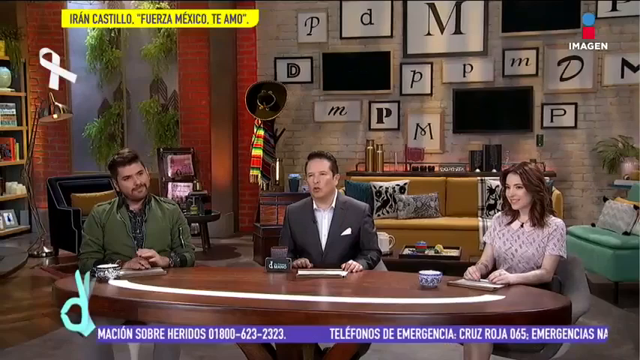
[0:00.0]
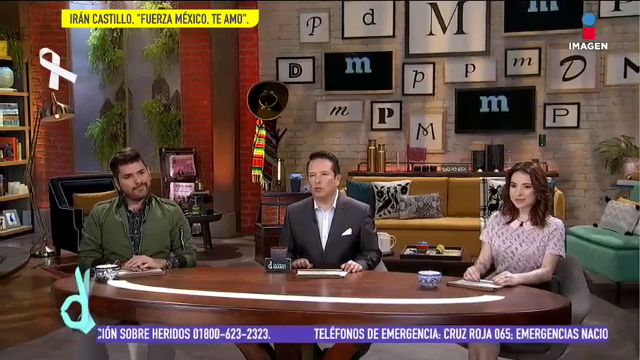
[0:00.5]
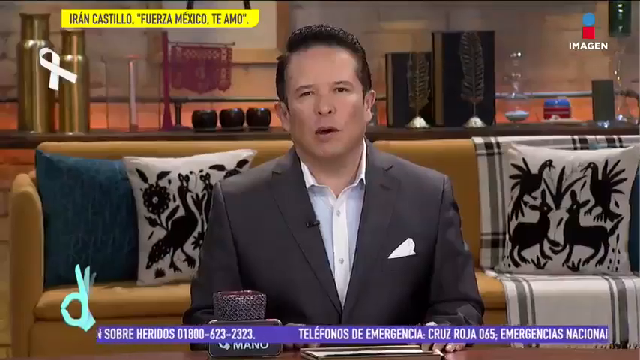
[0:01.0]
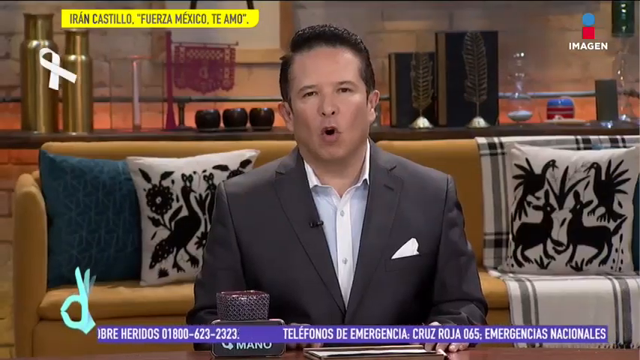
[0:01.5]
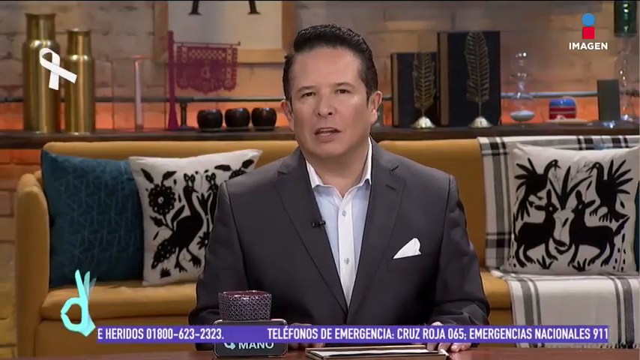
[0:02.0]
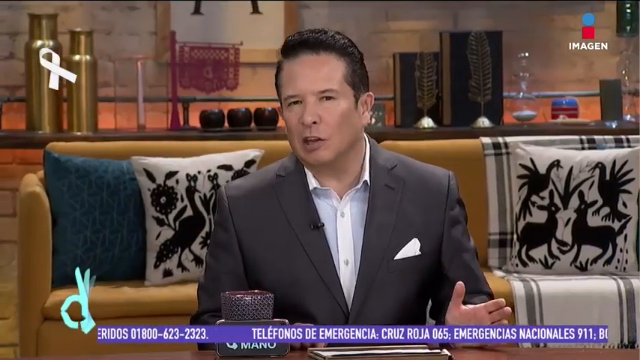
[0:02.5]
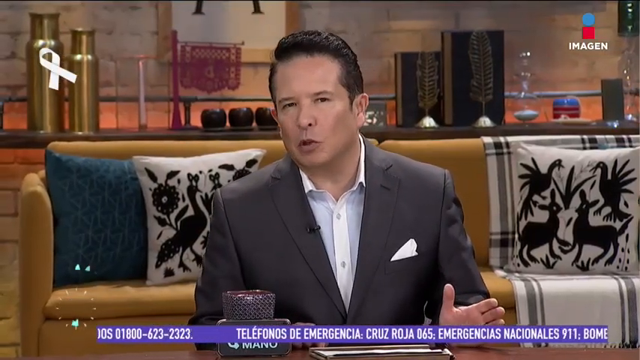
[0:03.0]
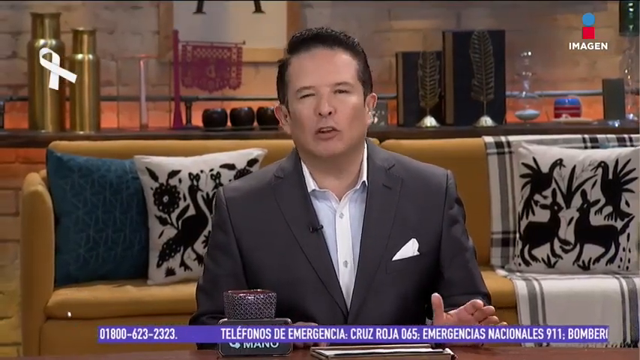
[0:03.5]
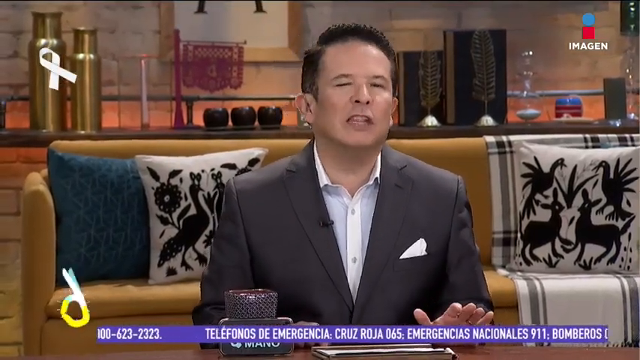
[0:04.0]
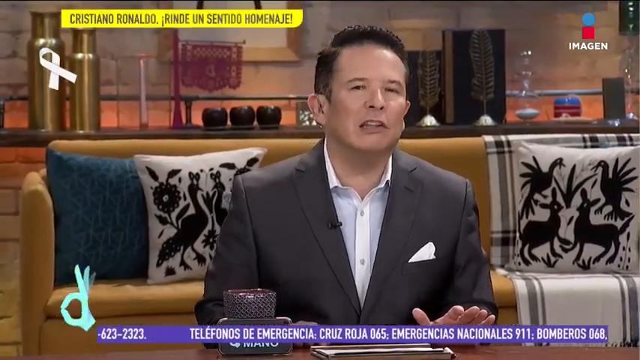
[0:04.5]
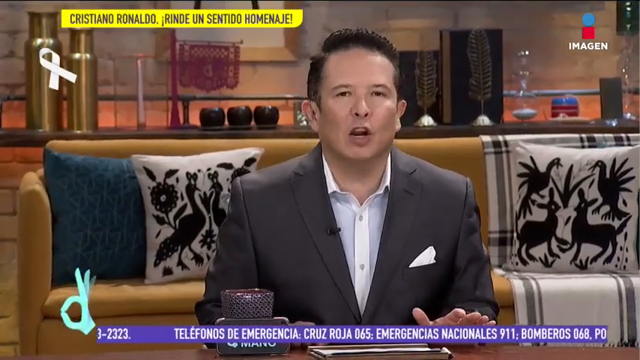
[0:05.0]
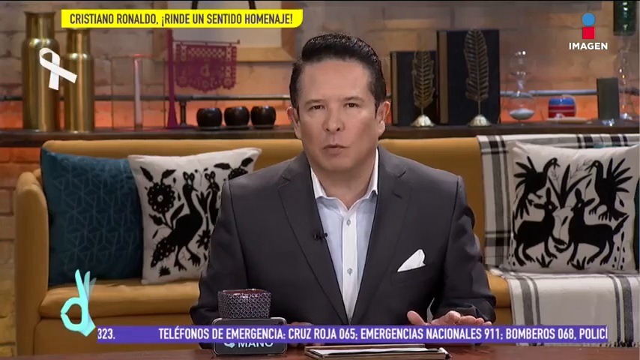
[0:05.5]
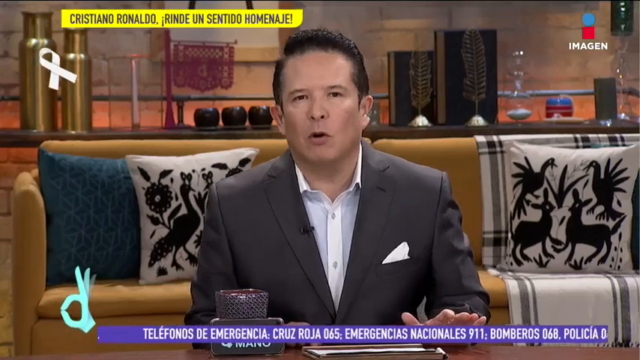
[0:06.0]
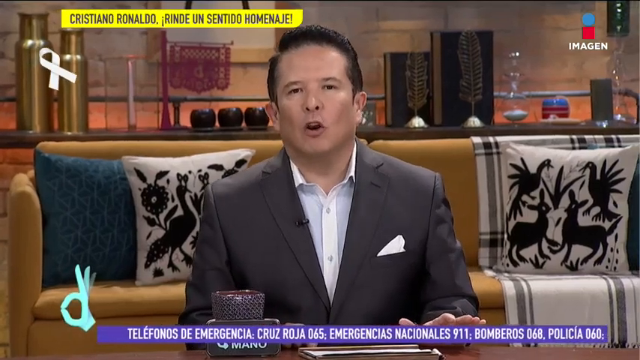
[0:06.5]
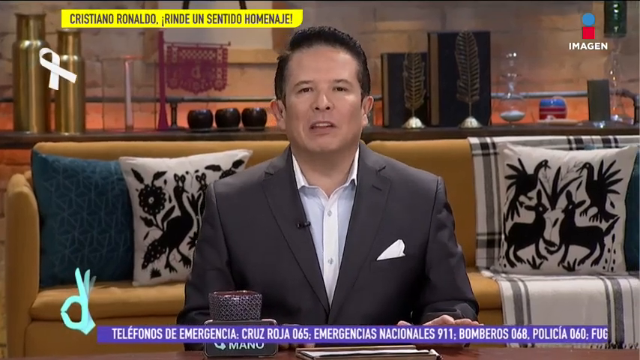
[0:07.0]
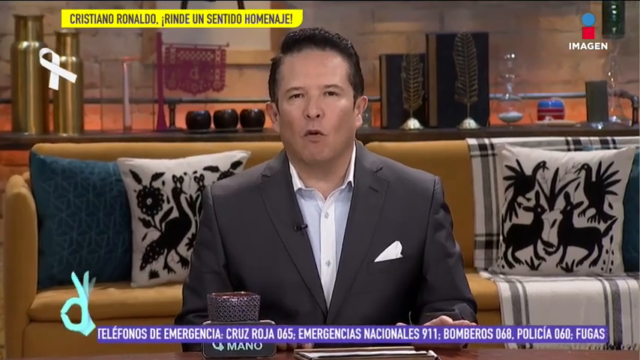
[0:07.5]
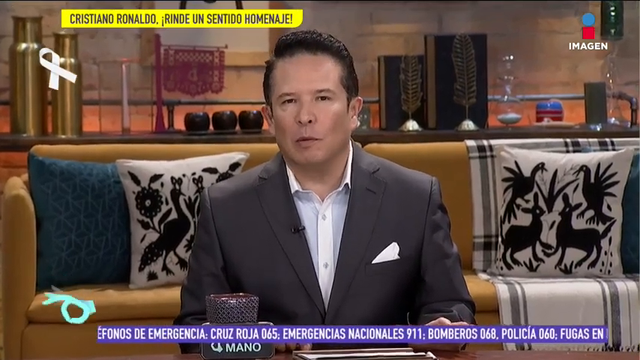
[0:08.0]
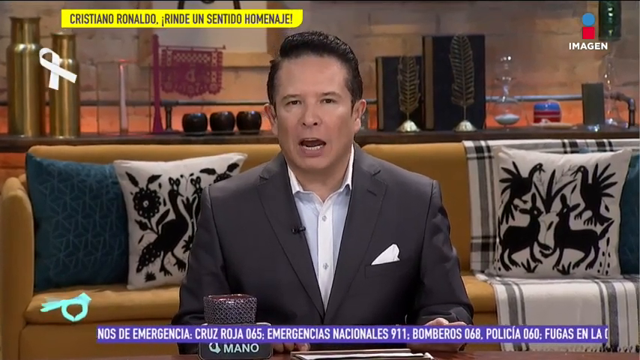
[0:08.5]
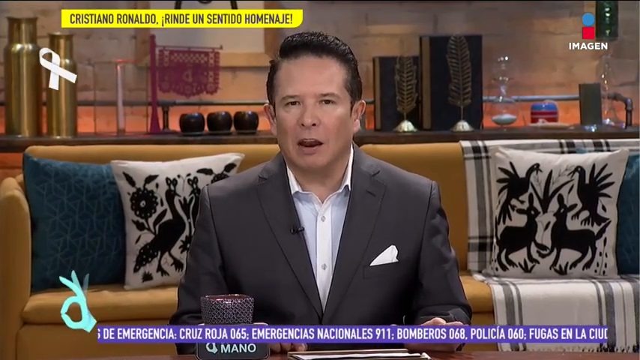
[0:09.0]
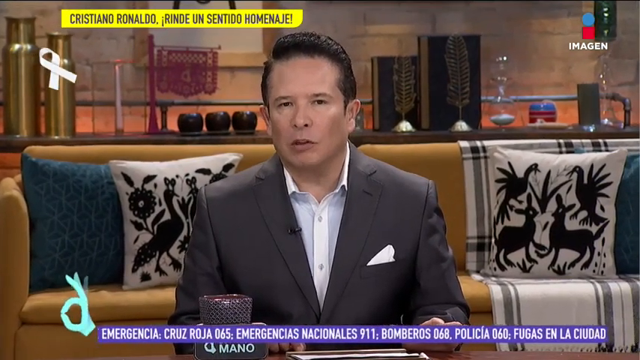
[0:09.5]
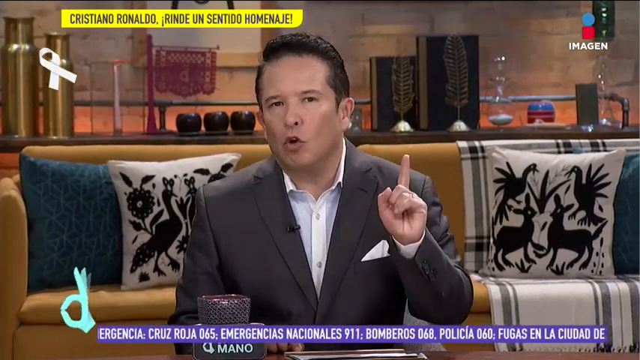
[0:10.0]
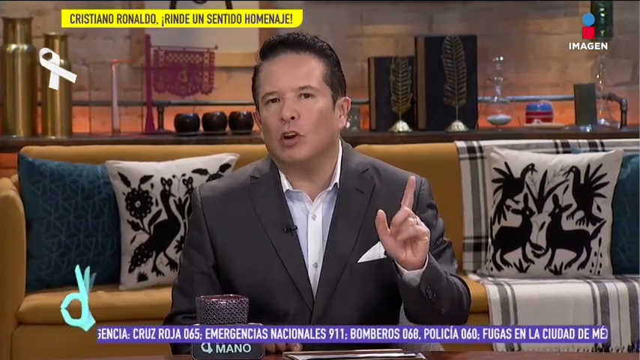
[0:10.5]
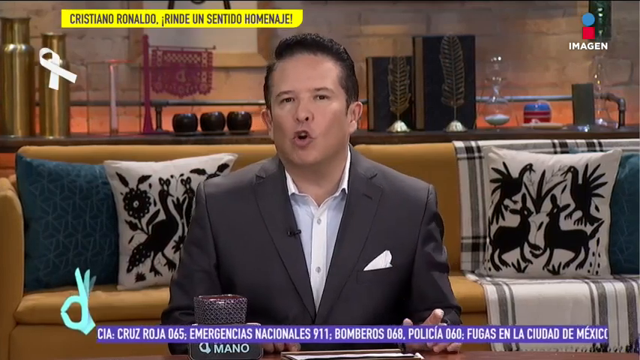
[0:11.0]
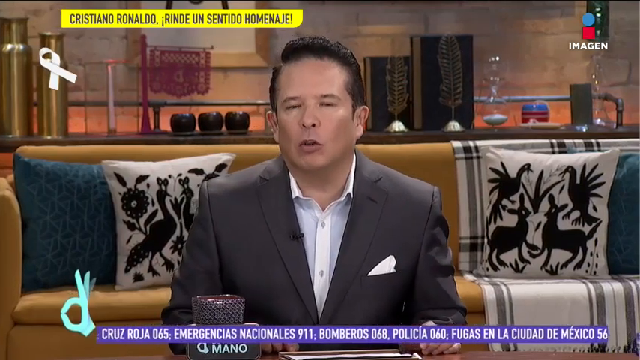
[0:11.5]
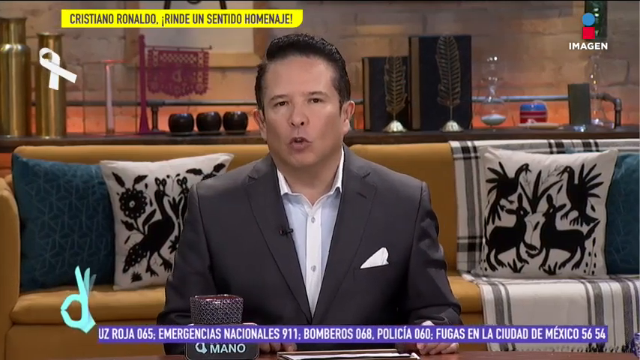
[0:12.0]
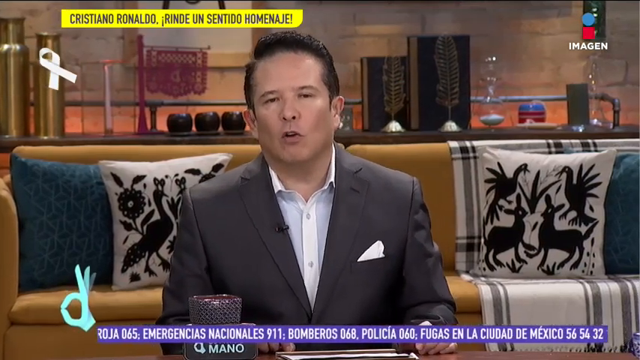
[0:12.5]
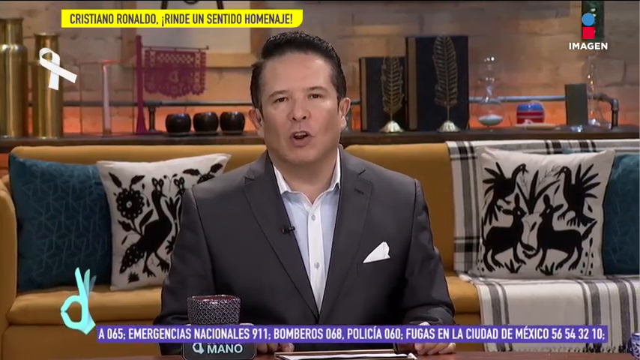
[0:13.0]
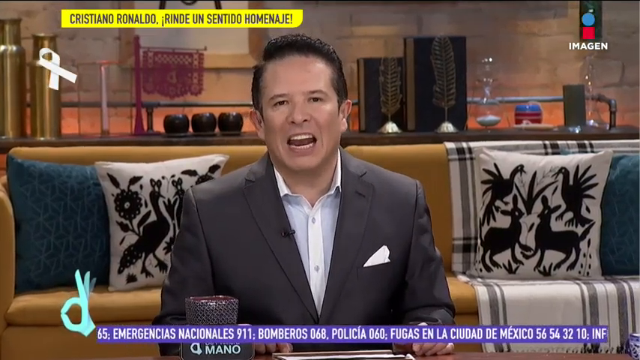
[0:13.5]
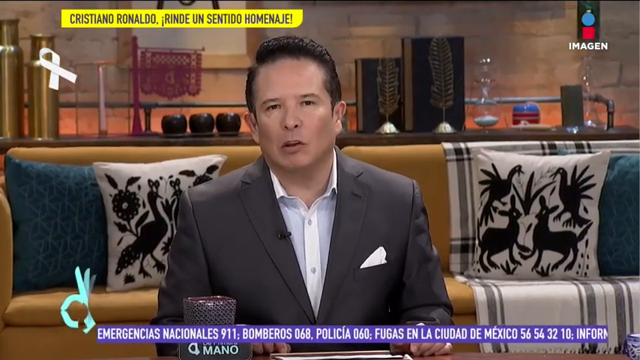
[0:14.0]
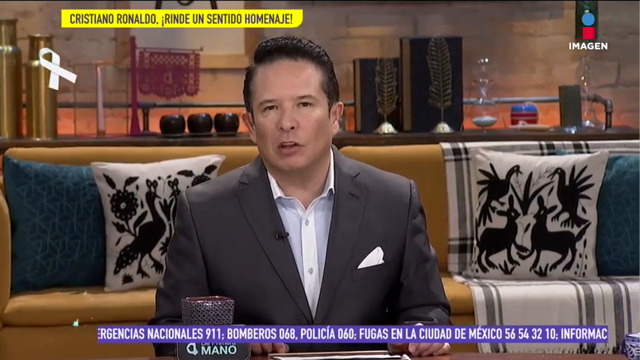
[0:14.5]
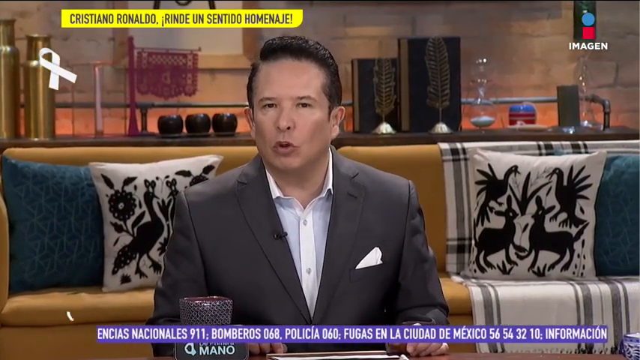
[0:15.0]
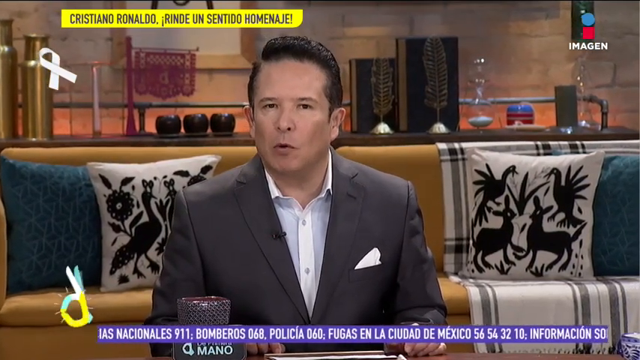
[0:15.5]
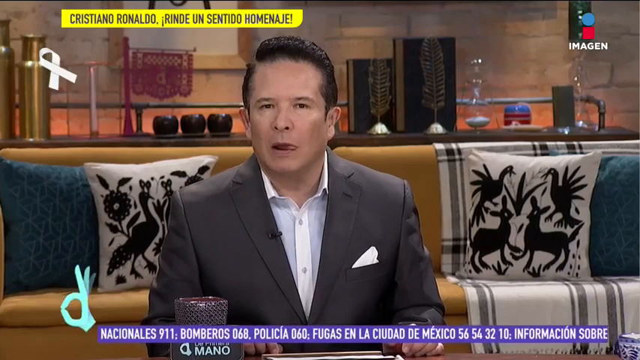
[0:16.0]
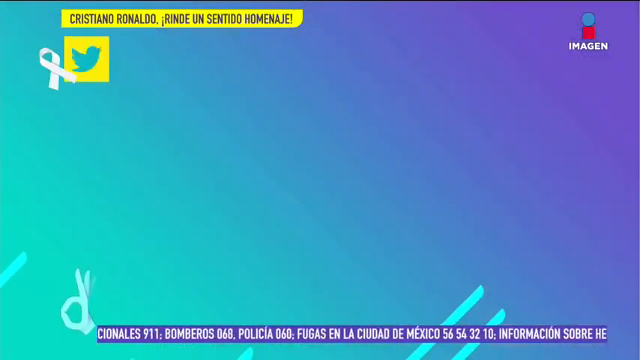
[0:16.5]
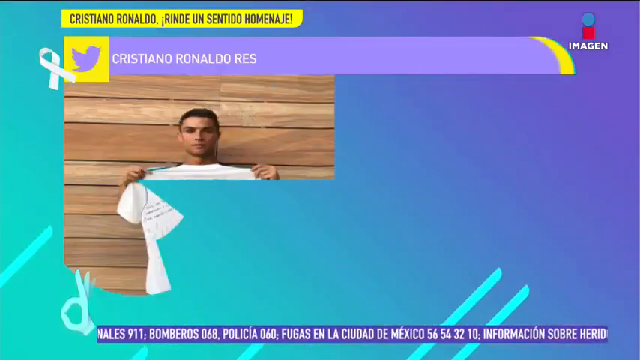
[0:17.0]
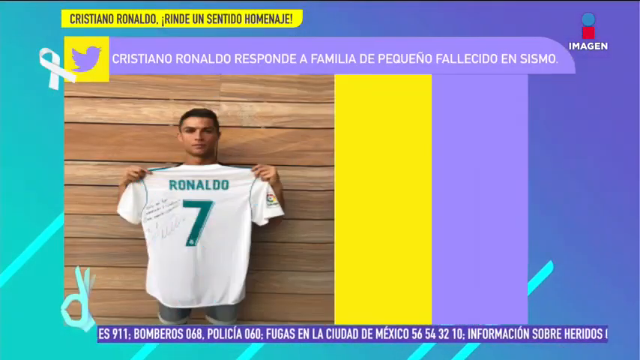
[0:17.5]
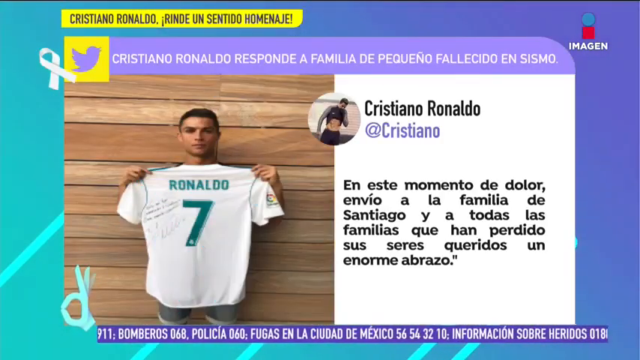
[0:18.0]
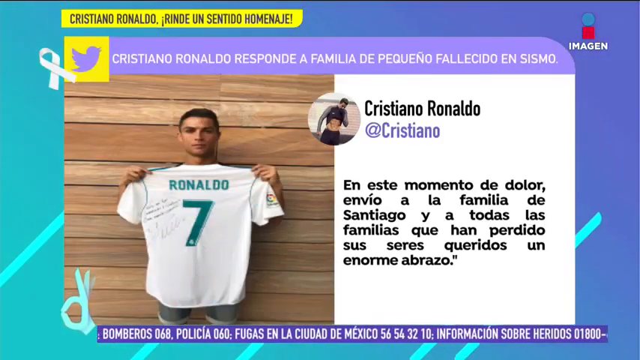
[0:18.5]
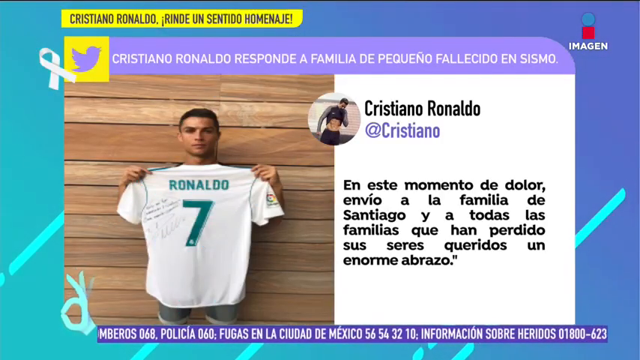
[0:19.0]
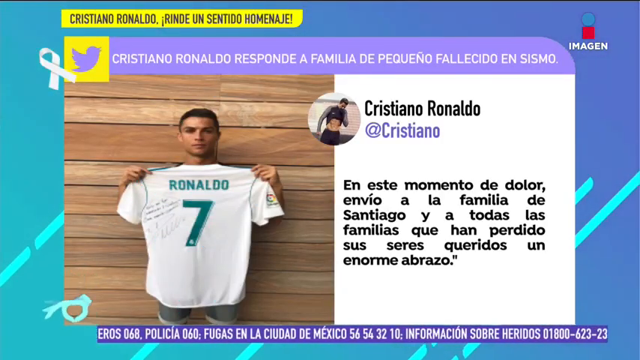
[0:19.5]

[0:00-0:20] The setting looks like a podcast studio. In the background, a bunch of letters on the wall serve as decoration, and on the left-hand side is the HIV symbol. In the middle of the shot, three individuals are seated at a round wooden table with a white strip that runs halfway across, and each has a cup in front of them. A pop-up with contact details appears at the bottom. The camera closes up on the man in the middle, who wears a gray suit with a white patterned shirt. He addresses the camera, moving his face to the left and then to the right, then raises his hand and points one finger before making a loud noise with his mouth, showing his teeth. The video then cuts to a tweet: first a background appears, then an image of a channel, and then the tweet shows up on the right-hand side with the Twitter symbol above it. The video then returns to the studio, where the three individuals, two men and one woman, are seated.